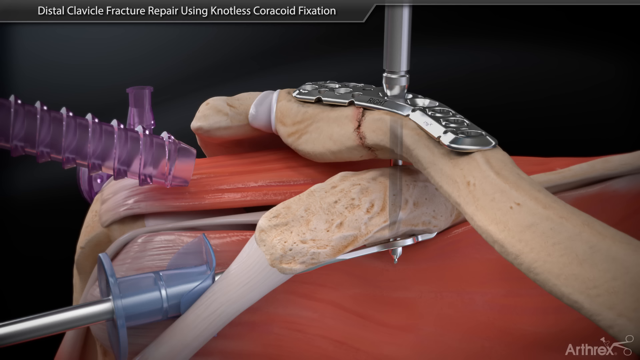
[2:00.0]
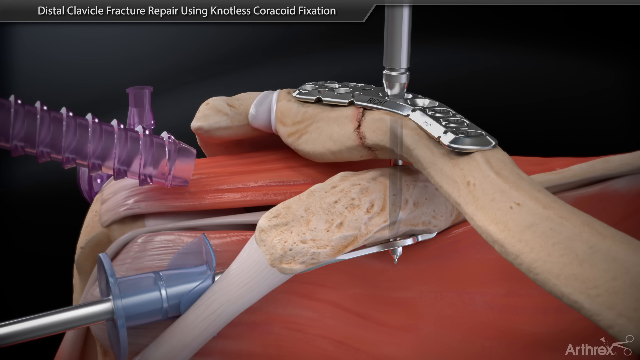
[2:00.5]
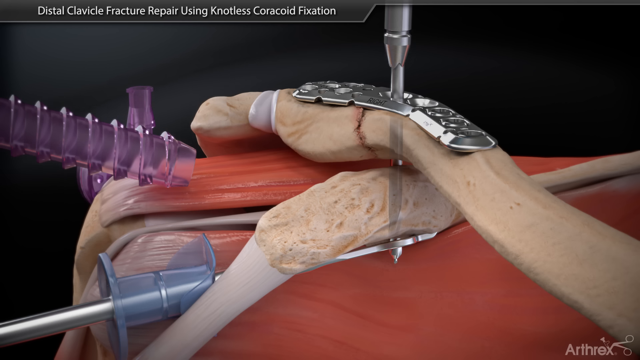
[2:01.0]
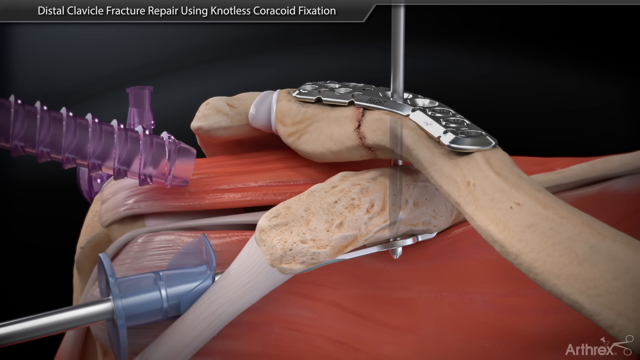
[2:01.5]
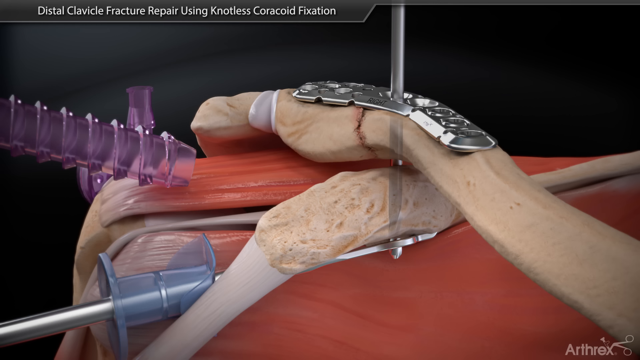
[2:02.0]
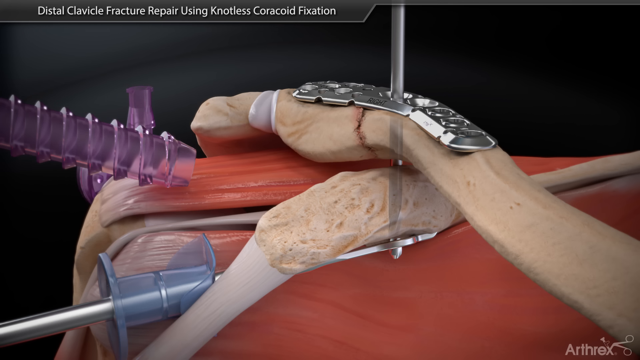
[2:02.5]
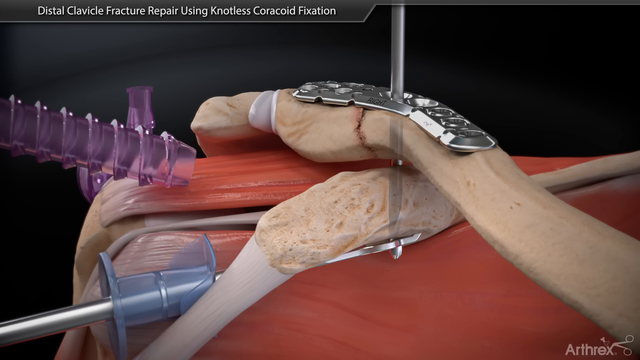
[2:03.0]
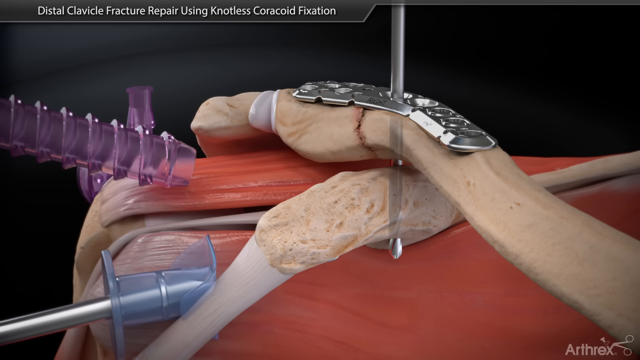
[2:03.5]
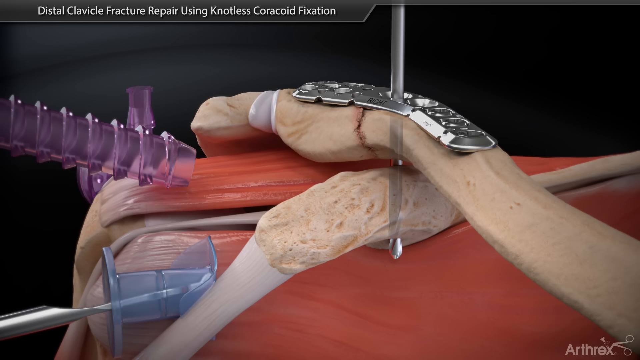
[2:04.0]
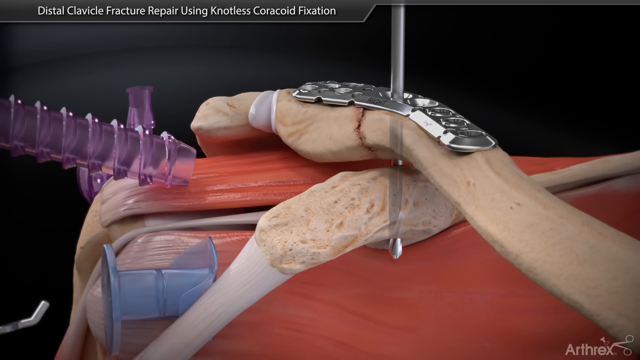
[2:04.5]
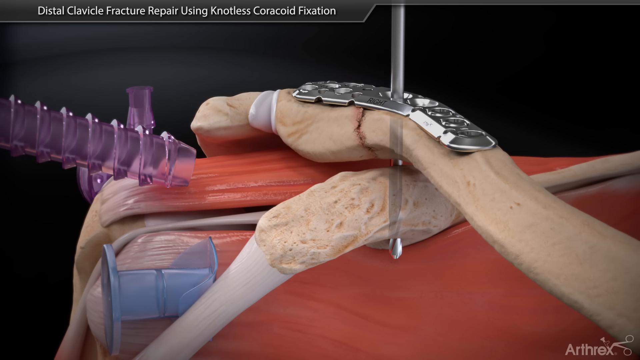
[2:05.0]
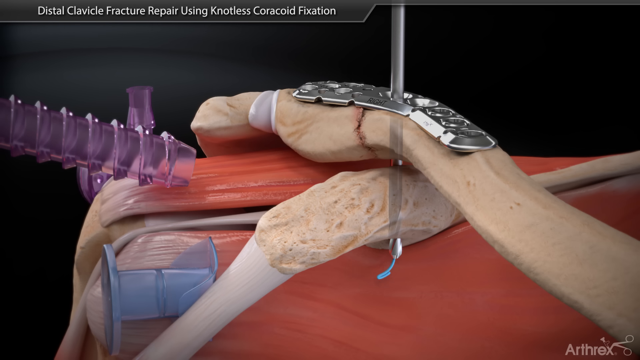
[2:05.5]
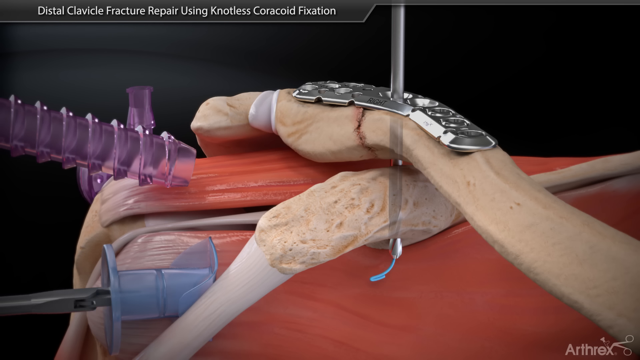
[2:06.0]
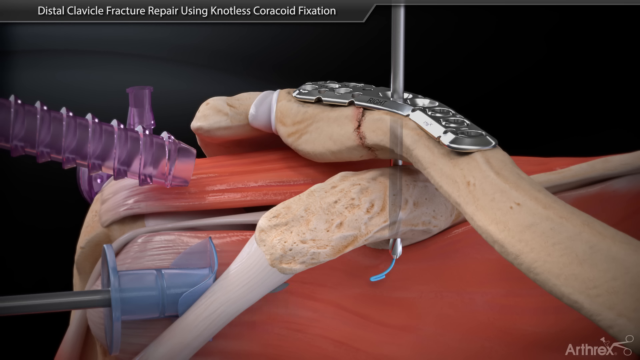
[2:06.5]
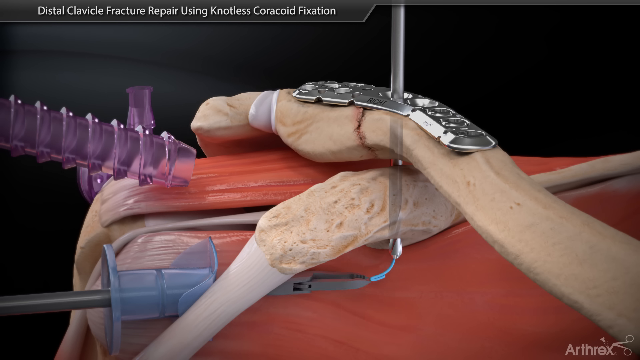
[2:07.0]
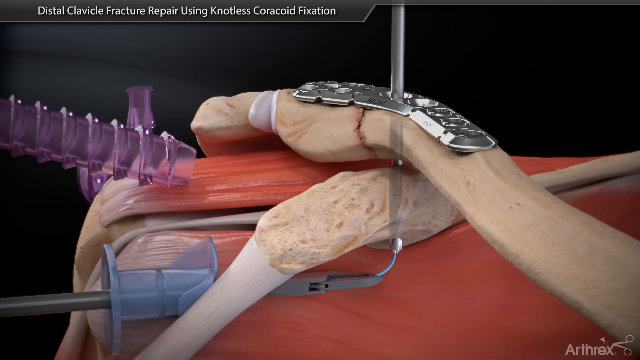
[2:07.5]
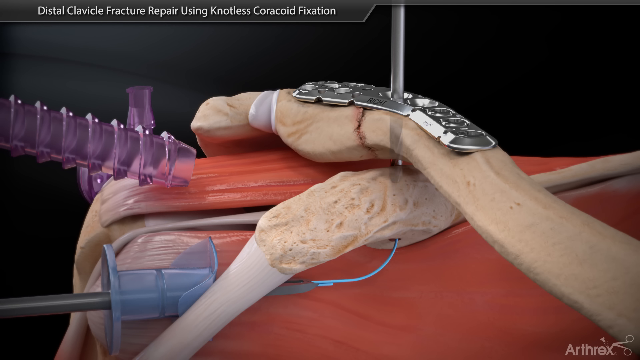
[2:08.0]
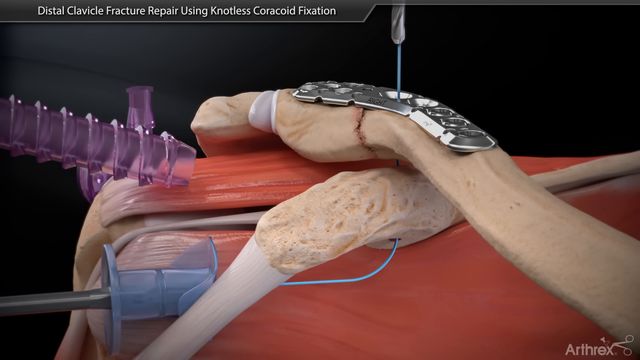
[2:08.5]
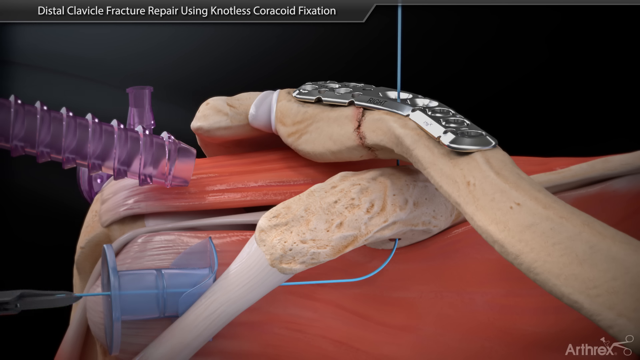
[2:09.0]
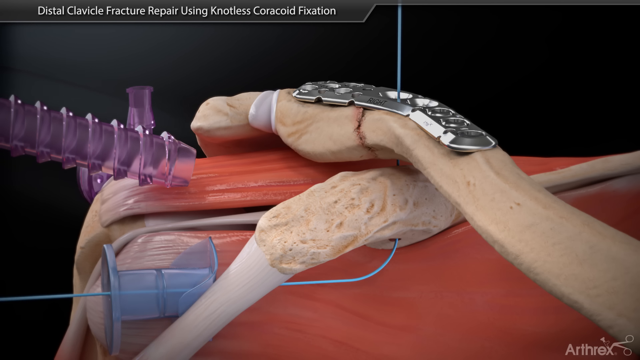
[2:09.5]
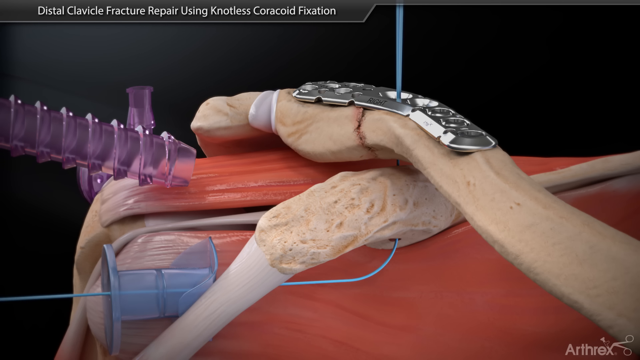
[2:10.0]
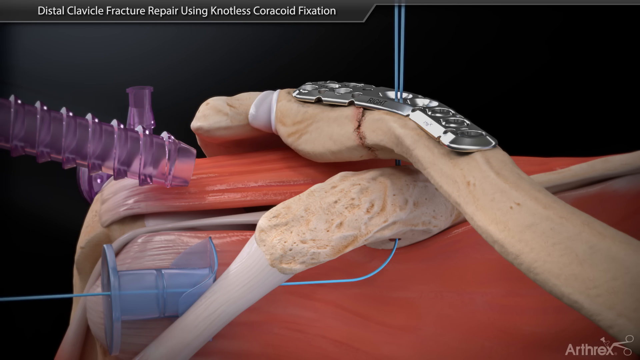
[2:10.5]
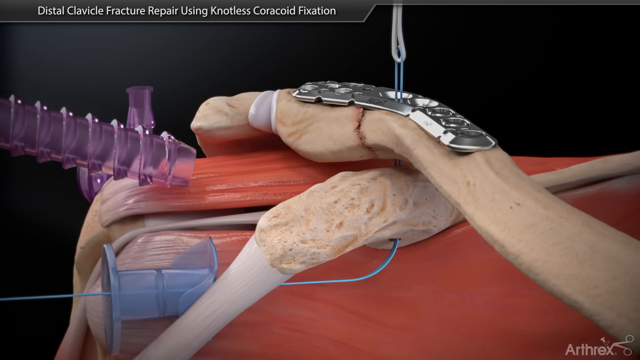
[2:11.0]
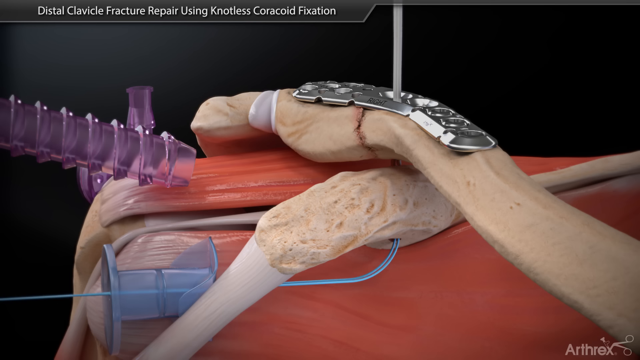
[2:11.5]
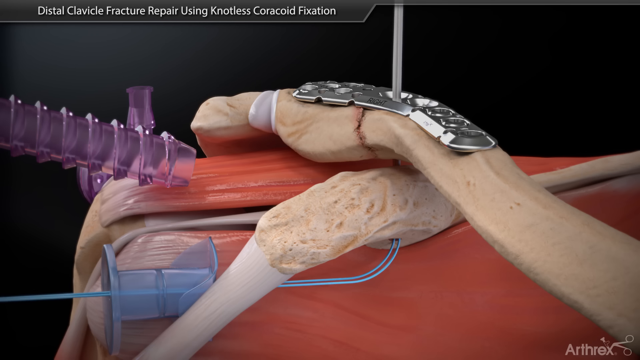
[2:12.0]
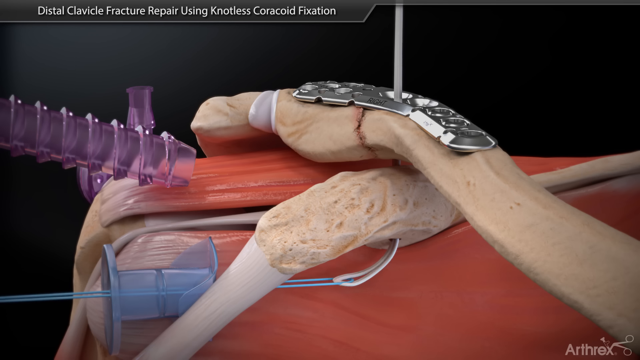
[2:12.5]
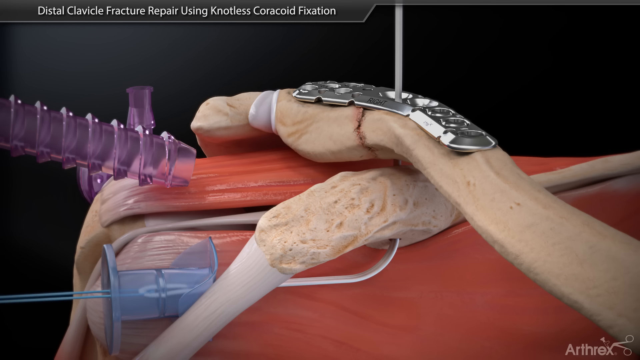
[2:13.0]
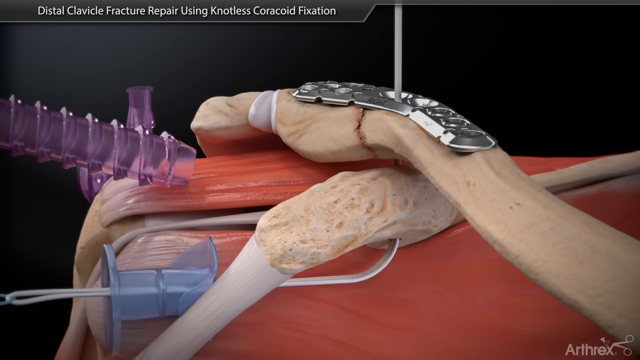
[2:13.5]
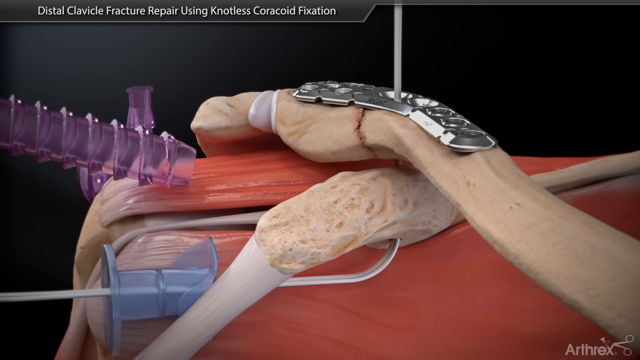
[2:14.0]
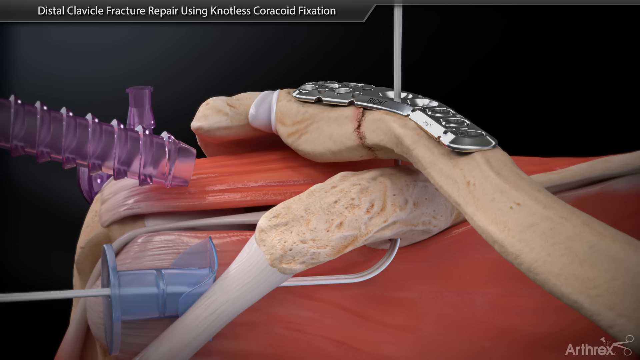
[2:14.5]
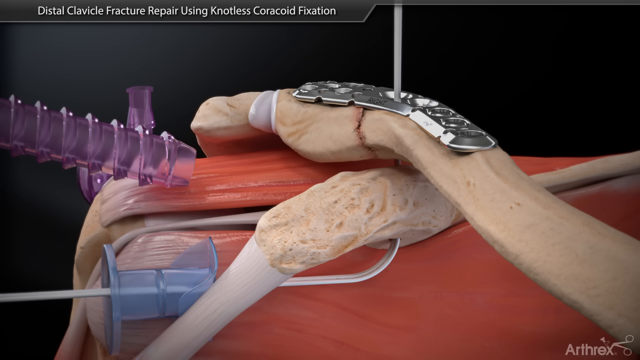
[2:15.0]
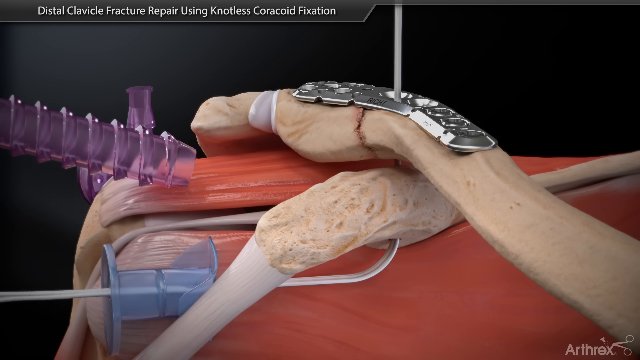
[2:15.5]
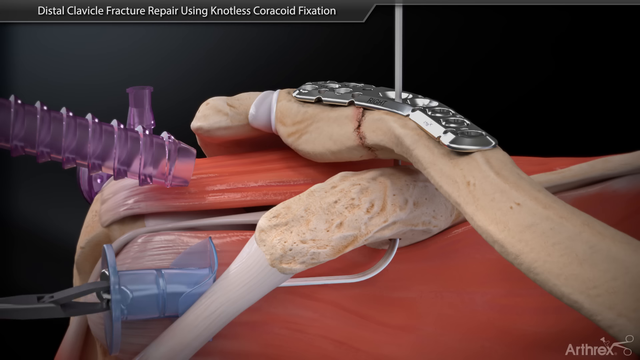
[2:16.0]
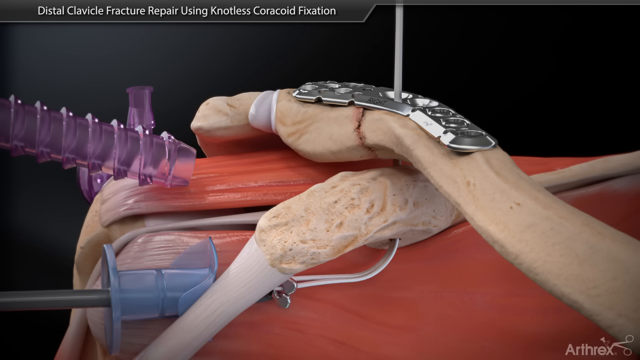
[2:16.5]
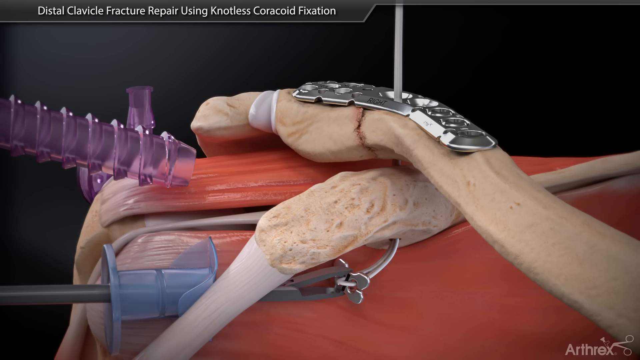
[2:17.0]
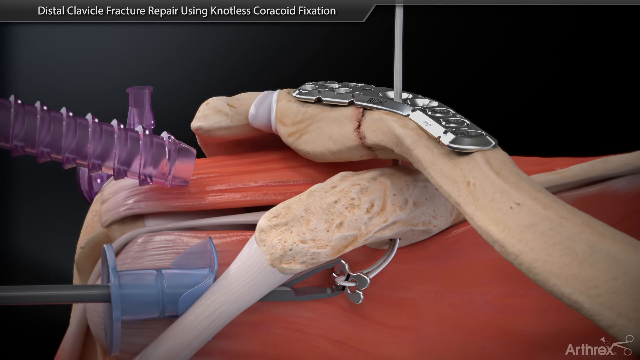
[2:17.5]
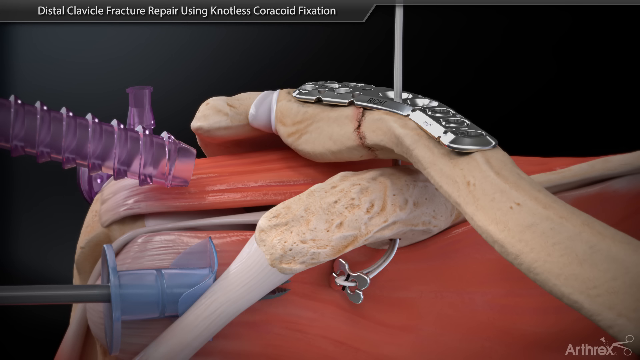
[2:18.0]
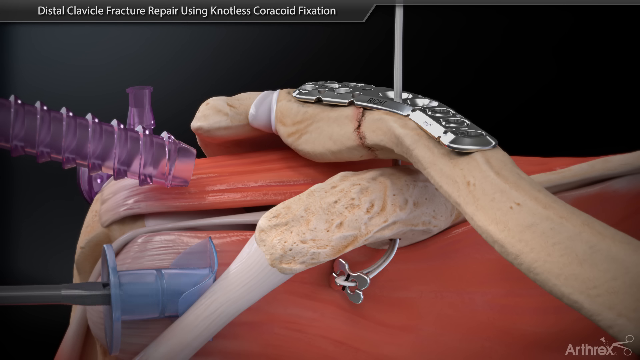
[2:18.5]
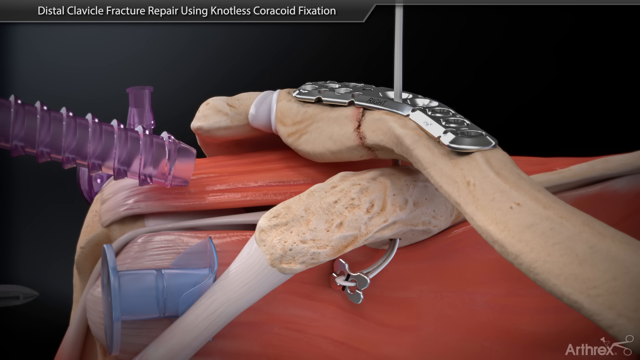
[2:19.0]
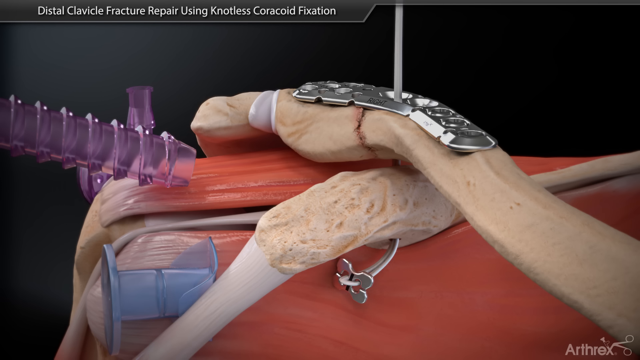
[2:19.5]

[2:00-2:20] The drill from the top goes through the top bone, the second bone, and the metal piece on the bottom. A pinkish purple thing rests just above the muscle, doing nothing, going off the left side. The bit comes through the bottom underneath the metal, then pulls back up through the top; the bit is still visible through the bone, and the metal piece that was underneath slides off the left side. Something that looks like a blue wire comes through, and little clippers come in, grab hold of it, and pull it through, leaving the blue wire coming out the top and the bottom and going to the left side. Another white piece comes down and goes through both bones to the left, through the little plastic thing that looks like a tape roll. The metal piece comes back in with the earlier clamp attached to the white piece of wire, then goes back off the left side and starts to pull the wire up through the bone, apparently to hold it in place and keep it from moving, with the smaller metal piece seemingly meant to sit on the underside of the second bone.